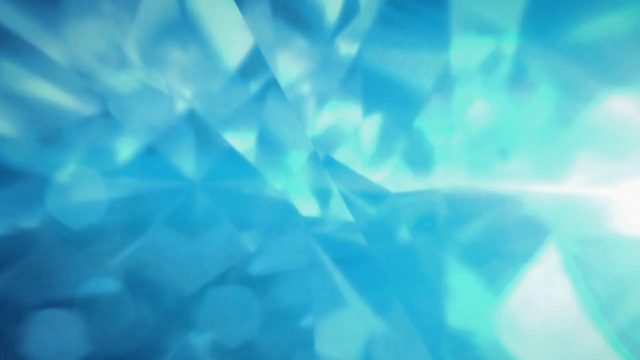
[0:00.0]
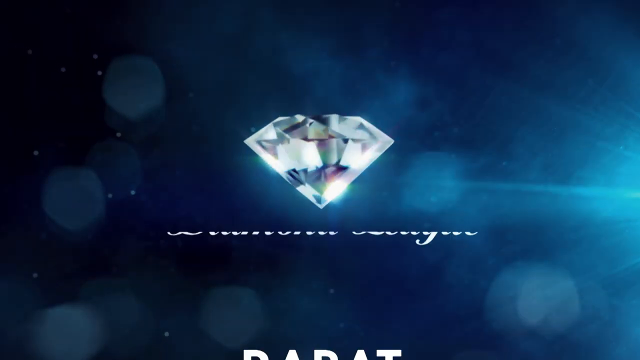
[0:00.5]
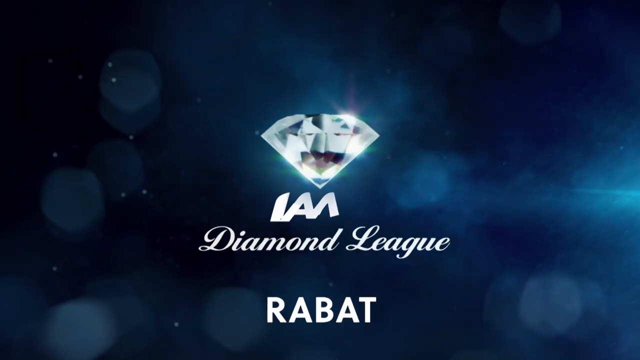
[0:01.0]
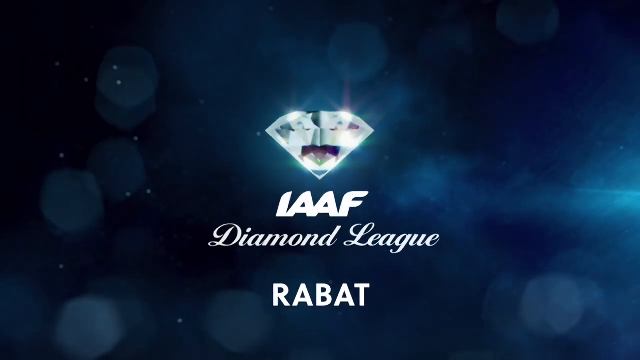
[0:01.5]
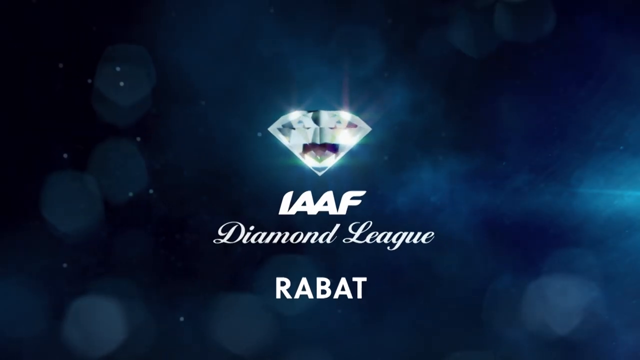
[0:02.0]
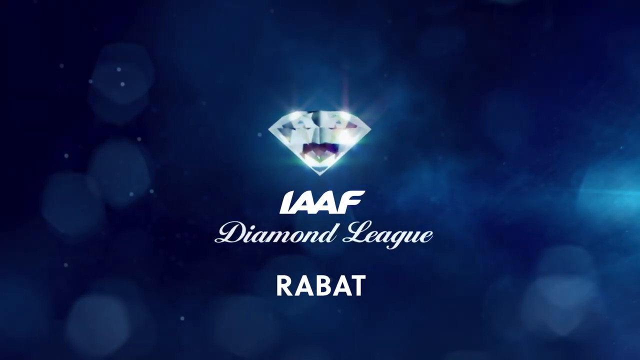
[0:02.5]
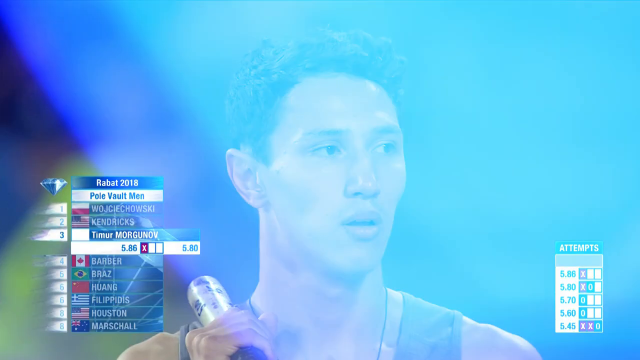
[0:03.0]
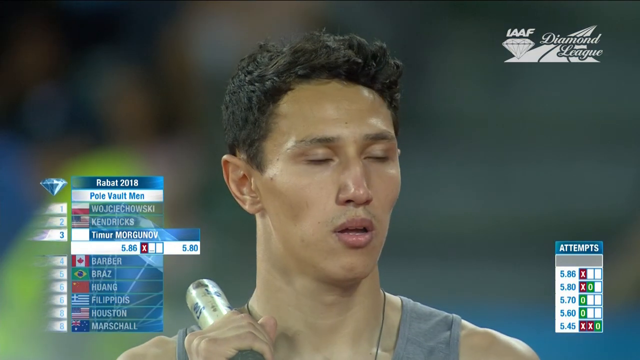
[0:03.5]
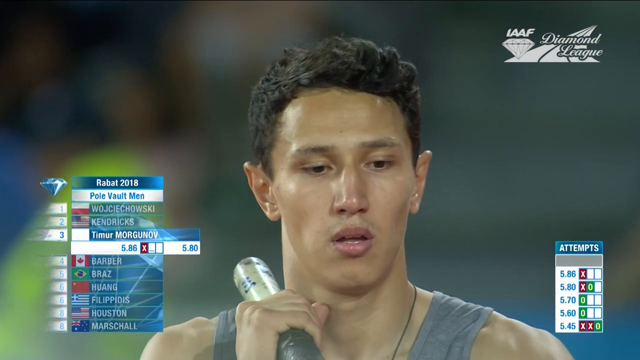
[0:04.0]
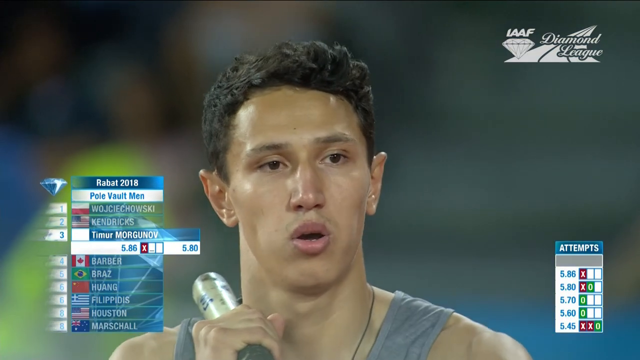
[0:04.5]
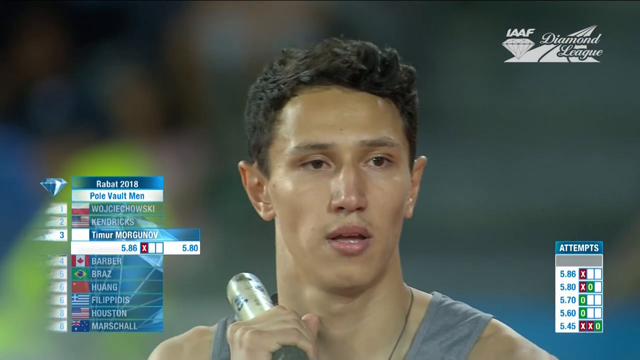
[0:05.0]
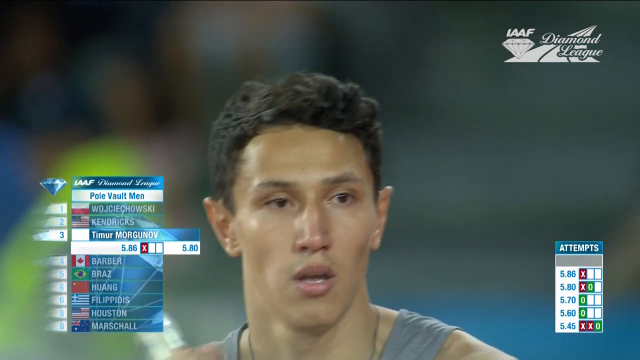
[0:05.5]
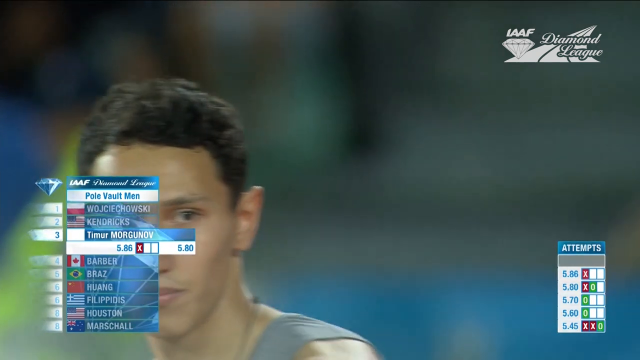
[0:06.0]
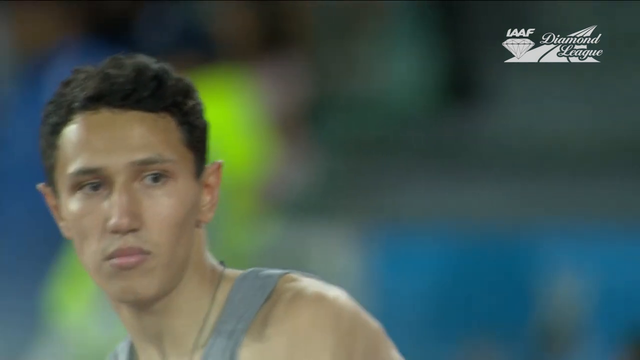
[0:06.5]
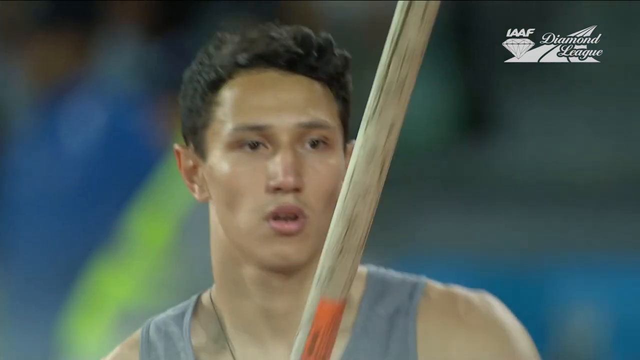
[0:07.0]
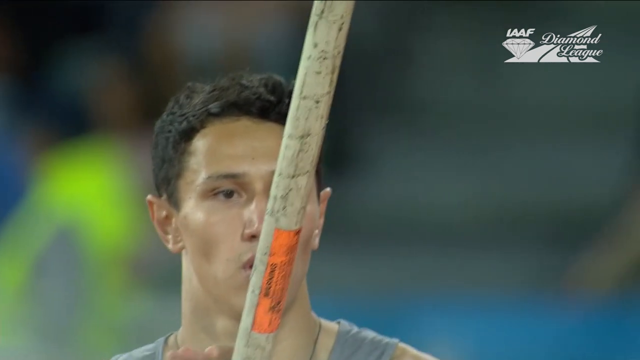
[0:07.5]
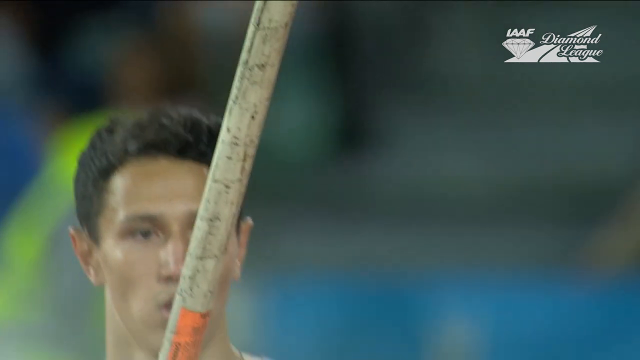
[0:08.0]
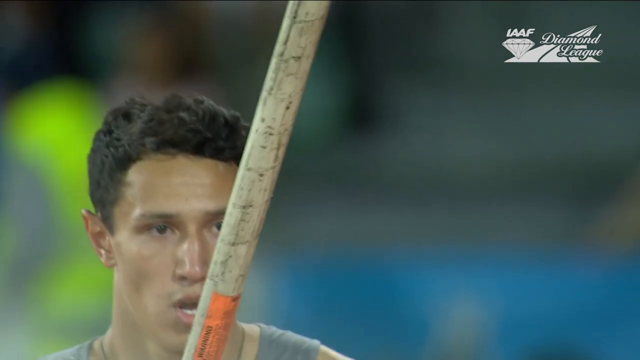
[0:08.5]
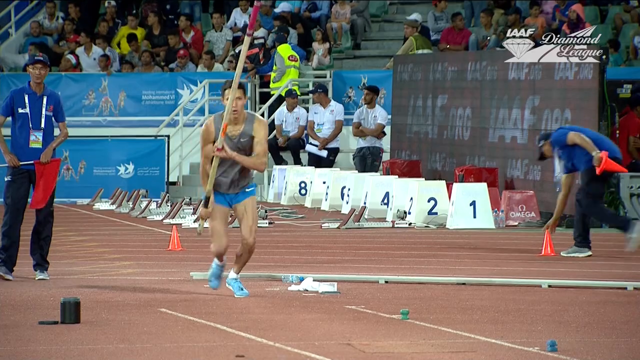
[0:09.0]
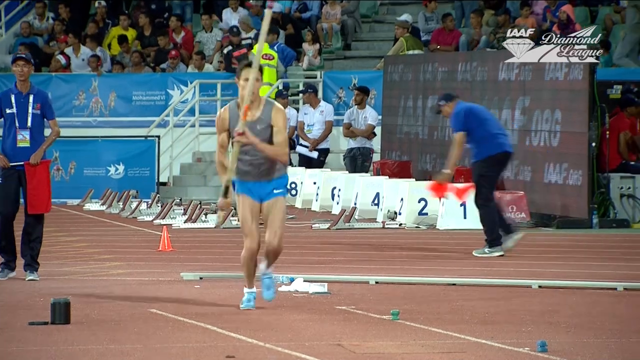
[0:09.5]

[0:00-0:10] An infographic reading "Diamond League IAAF" opens the video, followed by a diamond that seems to be the logo. The video then cuts directly to what seems to be the start of a competition. On the left of the screen is a ranking of pole vaulters by country, showing their current rankings in this competition. A man of ambiguous ethnicity and nationality, wearing a gray shirt and blue shorts, holds a pole, breathing heavily and seemingly psyching himself up for his attempt. He starts running, kicking his knees high up in the air, prepared to pole vault.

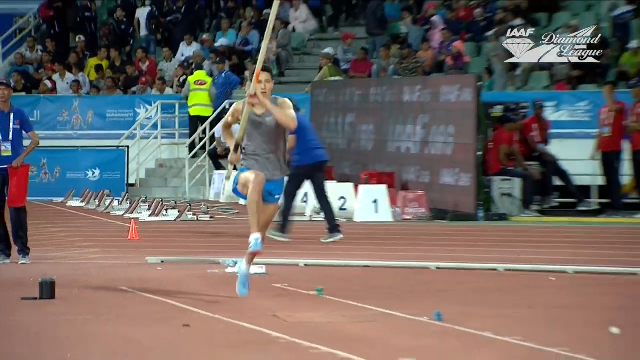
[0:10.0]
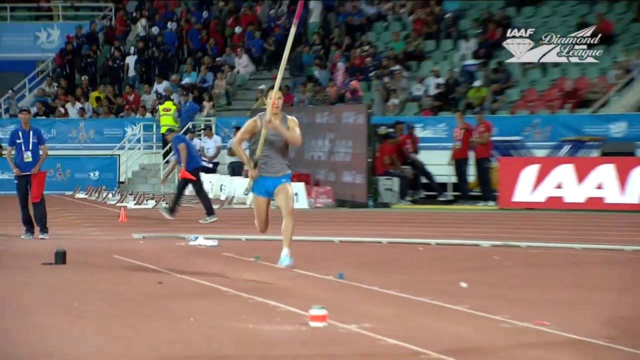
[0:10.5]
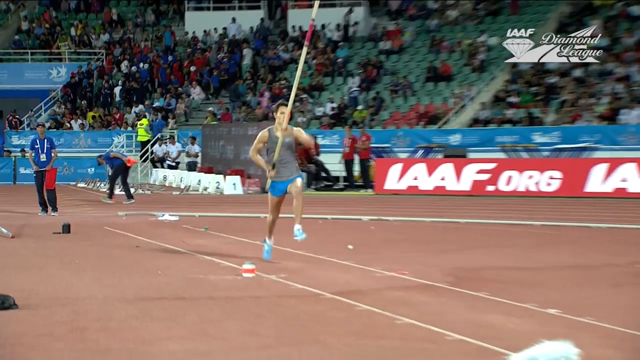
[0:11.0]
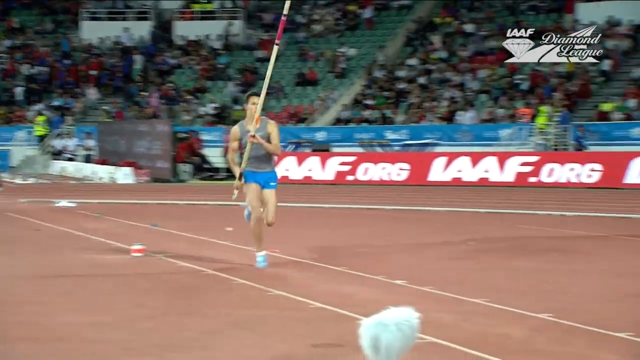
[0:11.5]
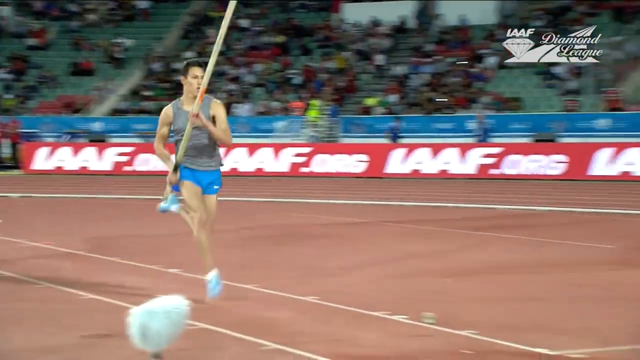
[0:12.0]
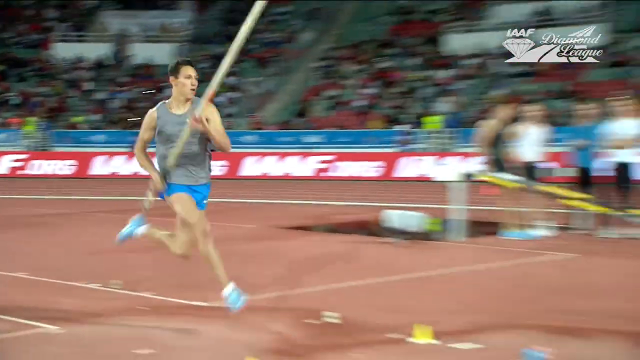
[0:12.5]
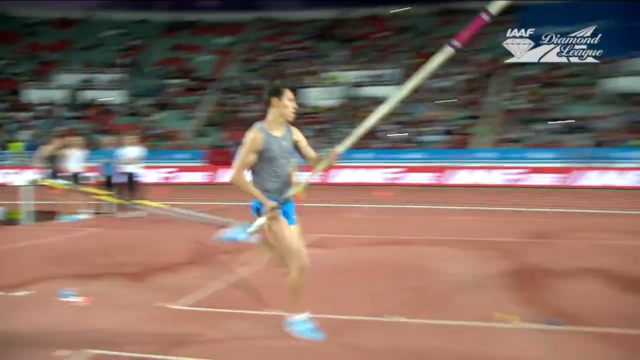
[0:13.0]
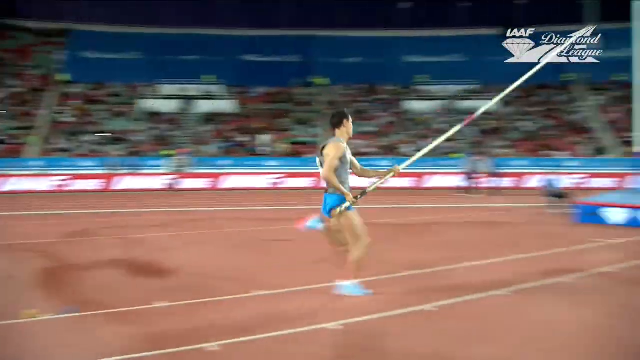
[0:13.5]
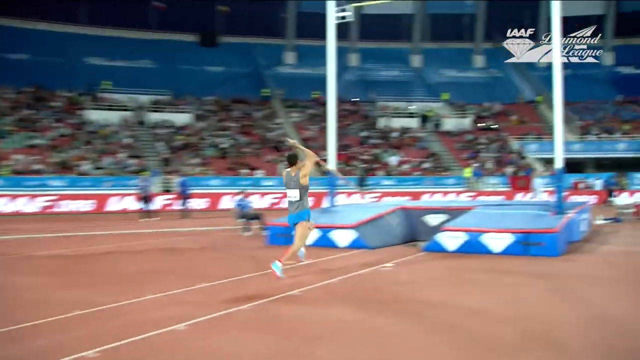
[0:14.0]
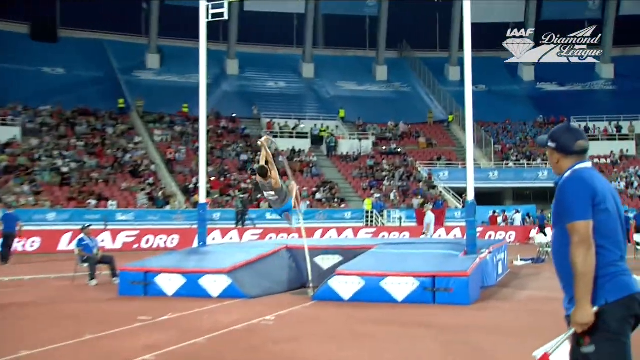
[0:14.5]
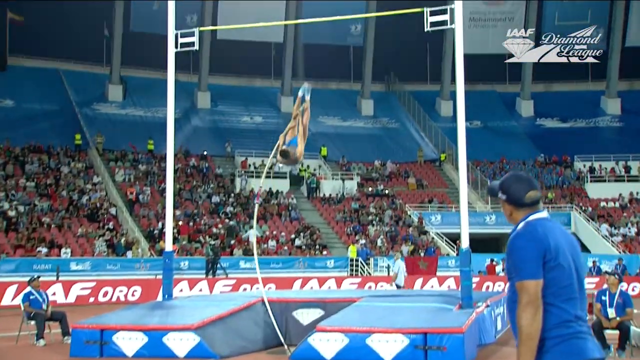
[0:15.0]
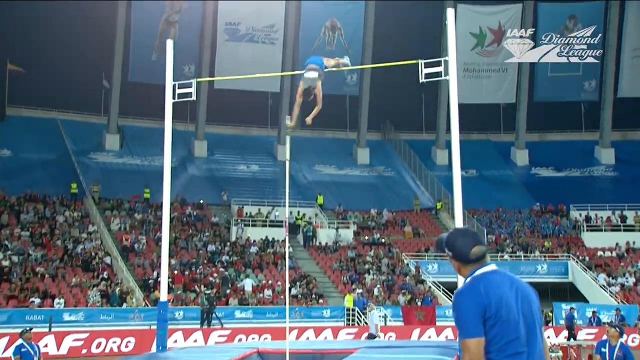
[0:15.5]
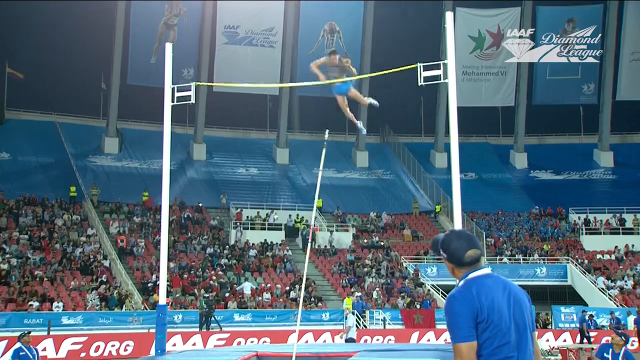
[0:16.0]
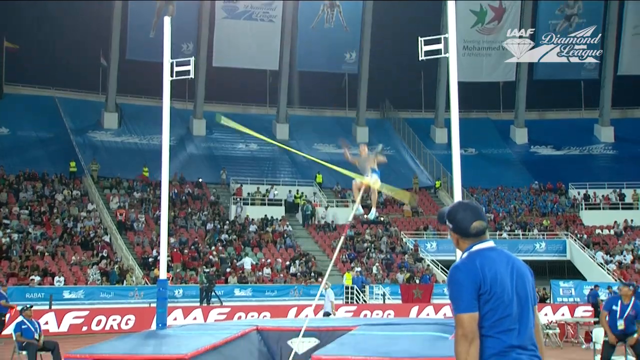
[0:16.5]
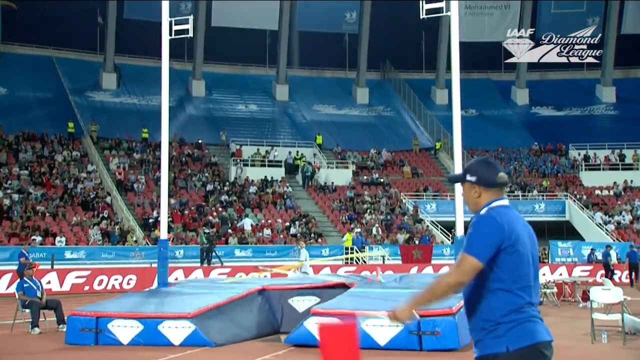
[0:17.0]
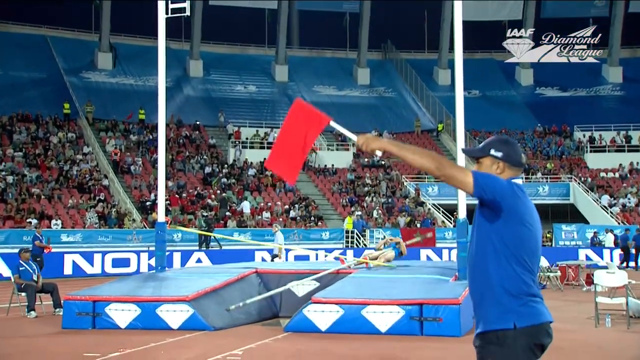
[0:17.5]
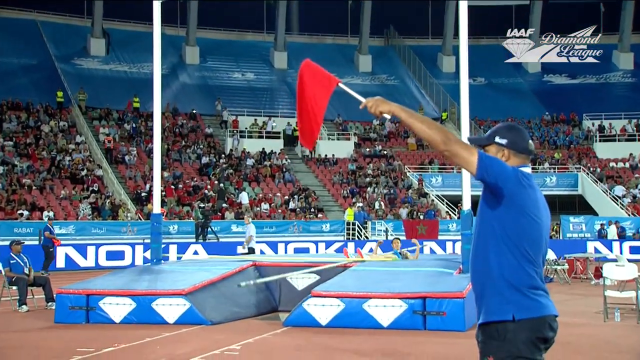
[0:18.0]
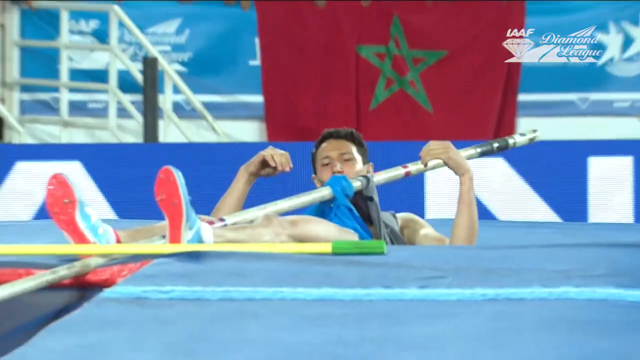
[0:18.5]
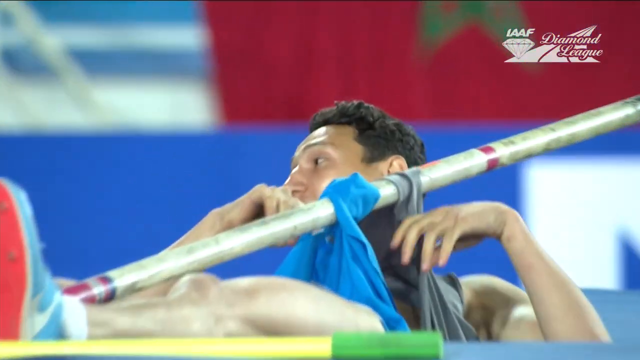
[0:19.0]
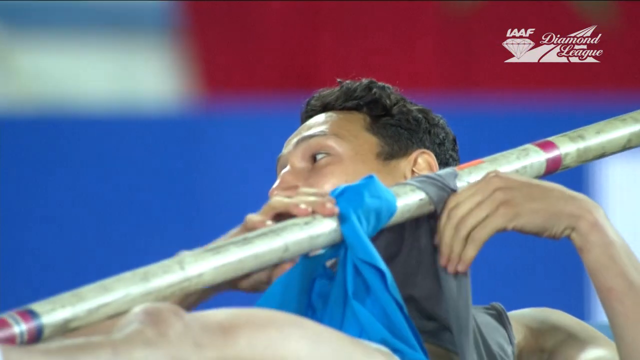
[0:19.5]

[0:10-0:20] The pole vaulter, in a gray shirt and blue shorts, runs with high kicks, holding the pole in front of him. He strikes the pole on the ground and attempts the jump, twisting in the air, but his belly knocks the bar down. He falls onto the safety mat and seems to be laughing at his own failure. Lying on the mat, he is sweating; he looks up and looks disappointed, but still laughs. It is unclear what country he is competing for.